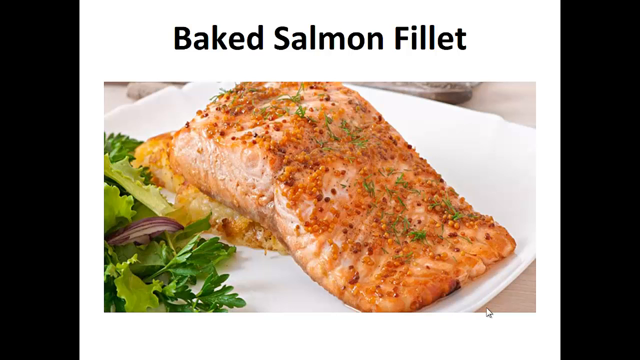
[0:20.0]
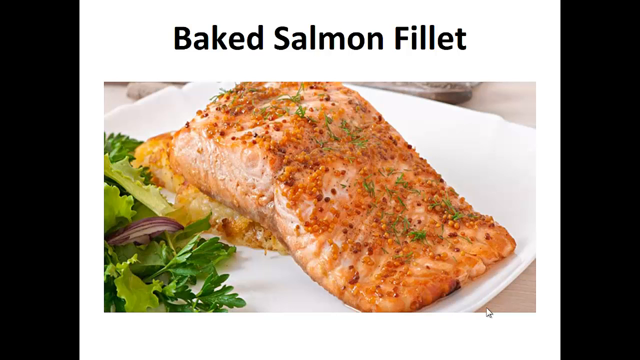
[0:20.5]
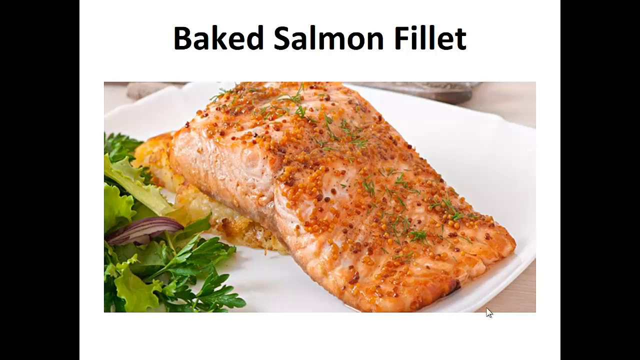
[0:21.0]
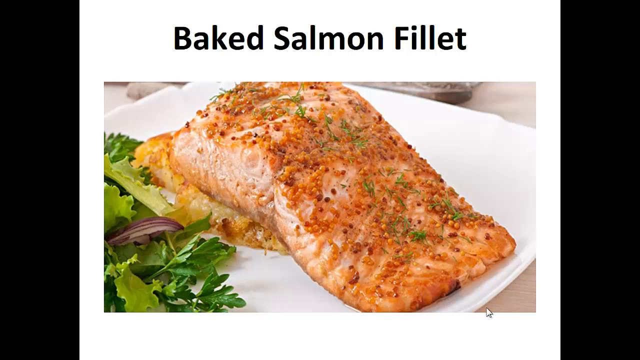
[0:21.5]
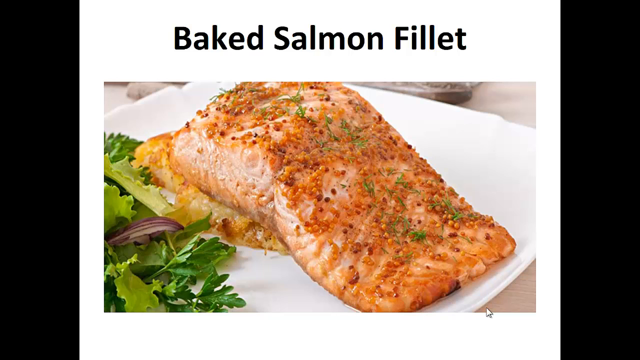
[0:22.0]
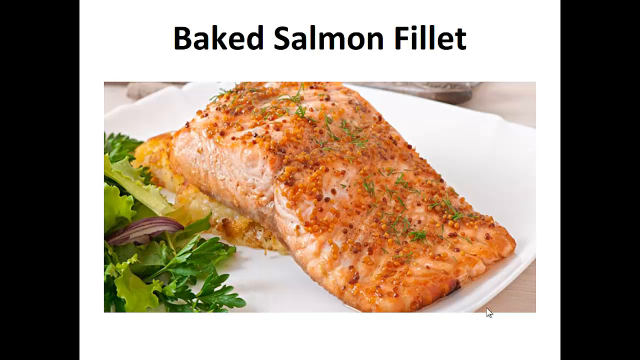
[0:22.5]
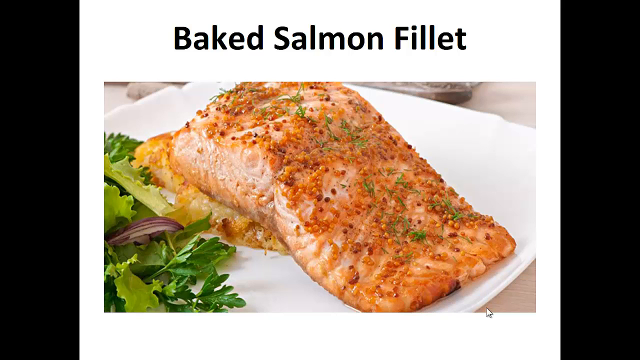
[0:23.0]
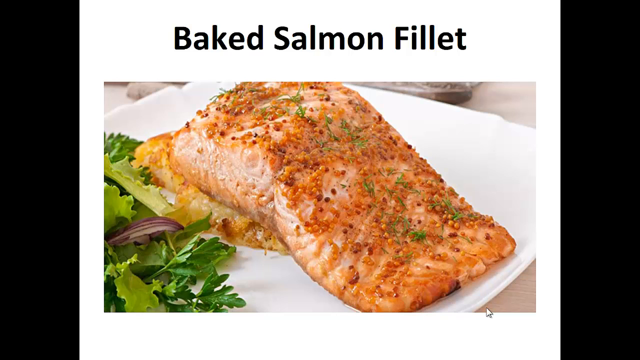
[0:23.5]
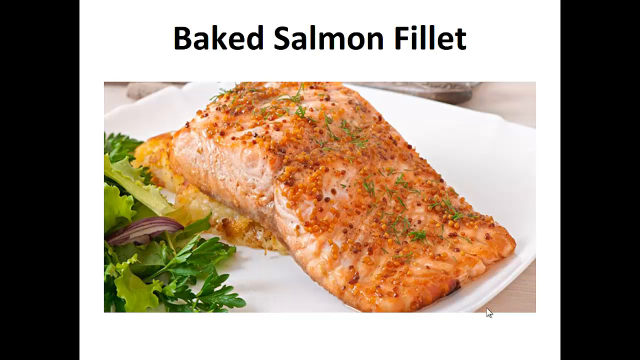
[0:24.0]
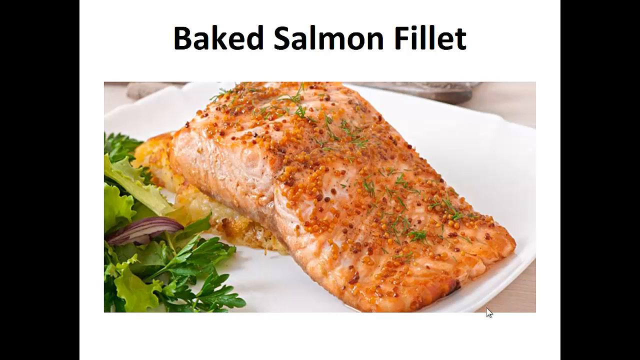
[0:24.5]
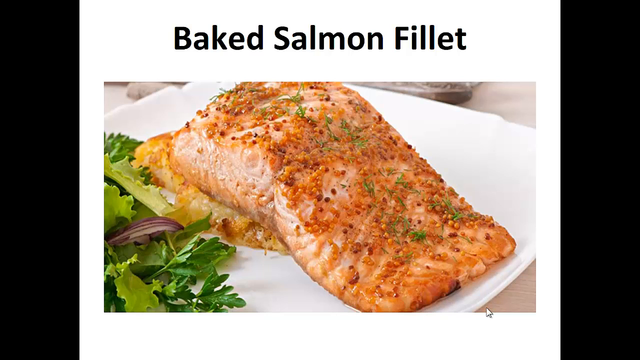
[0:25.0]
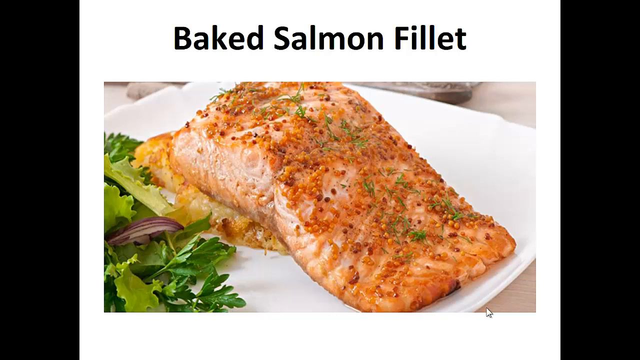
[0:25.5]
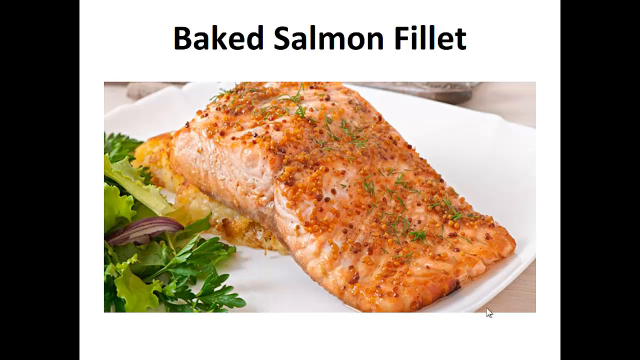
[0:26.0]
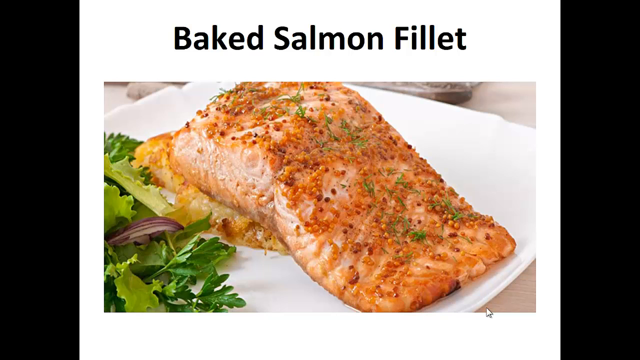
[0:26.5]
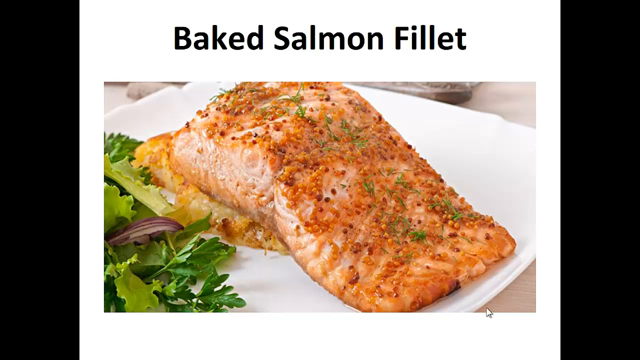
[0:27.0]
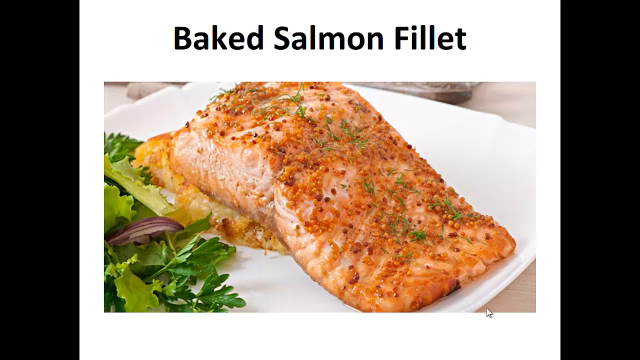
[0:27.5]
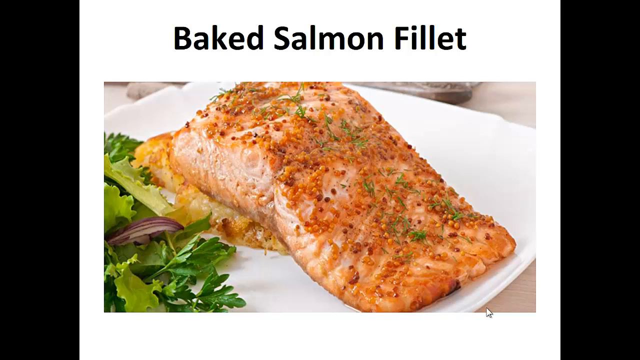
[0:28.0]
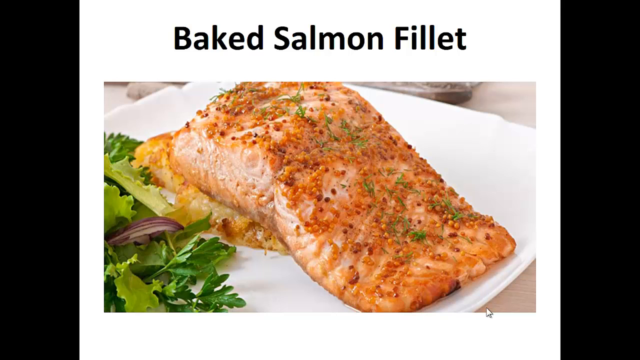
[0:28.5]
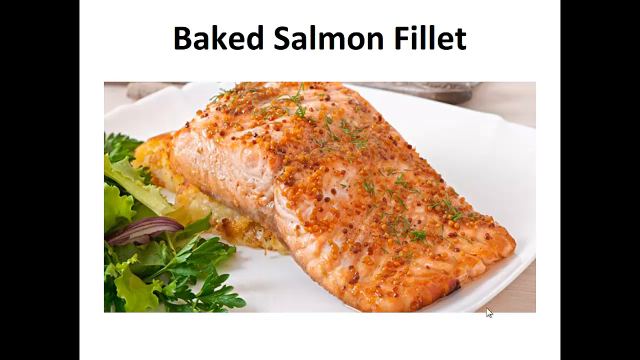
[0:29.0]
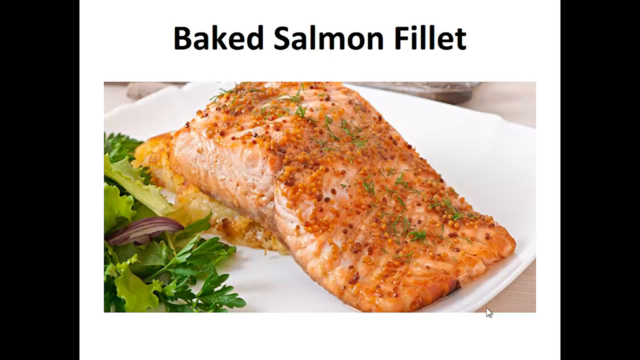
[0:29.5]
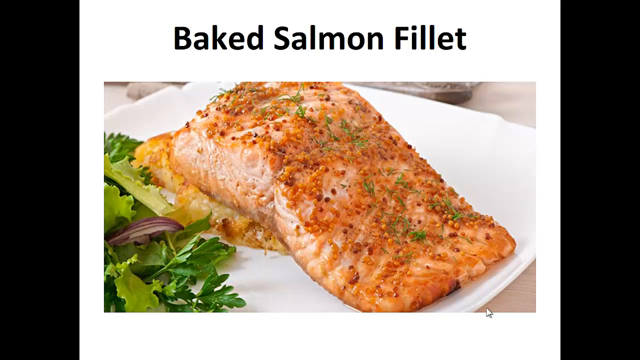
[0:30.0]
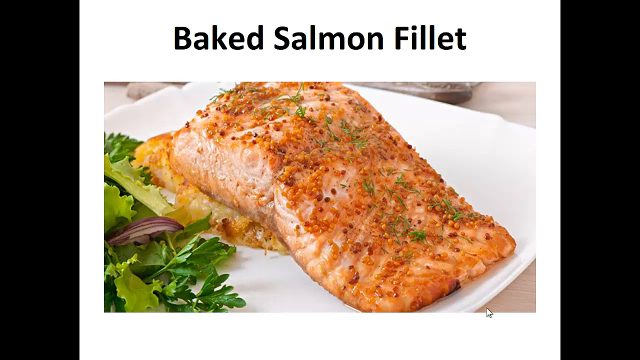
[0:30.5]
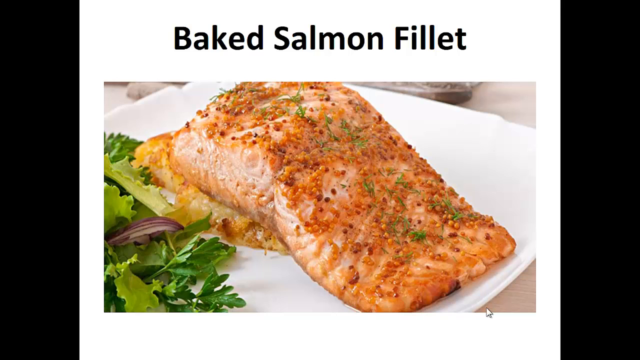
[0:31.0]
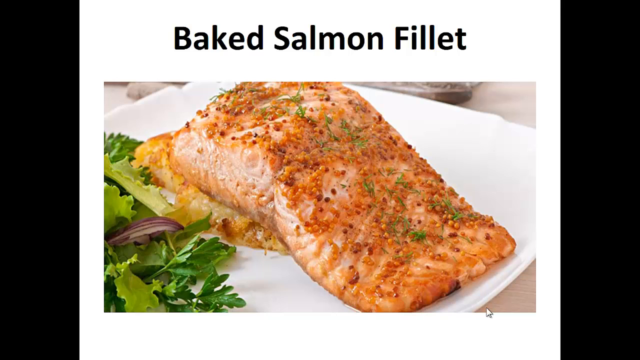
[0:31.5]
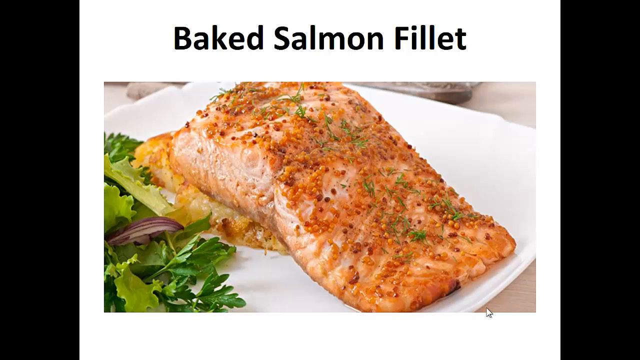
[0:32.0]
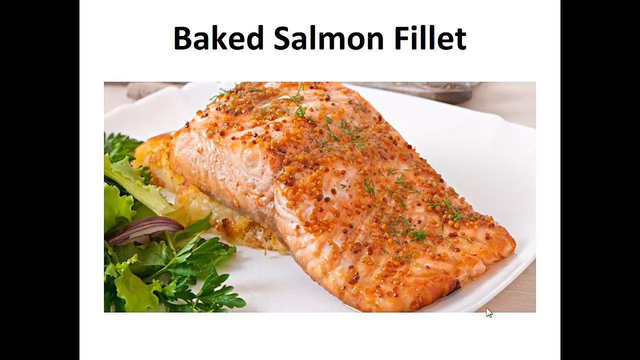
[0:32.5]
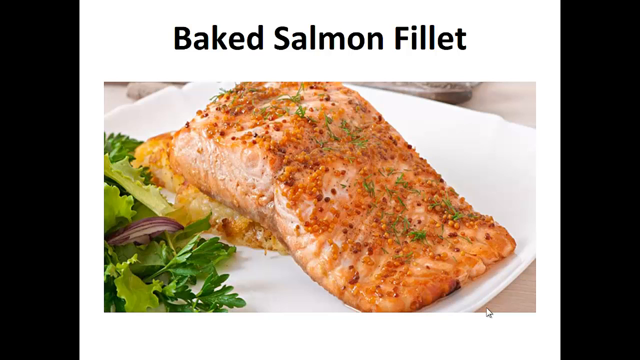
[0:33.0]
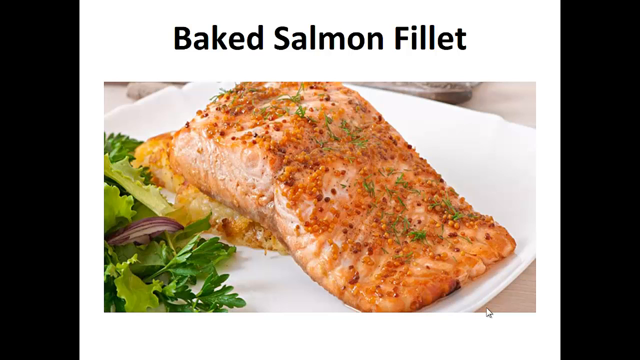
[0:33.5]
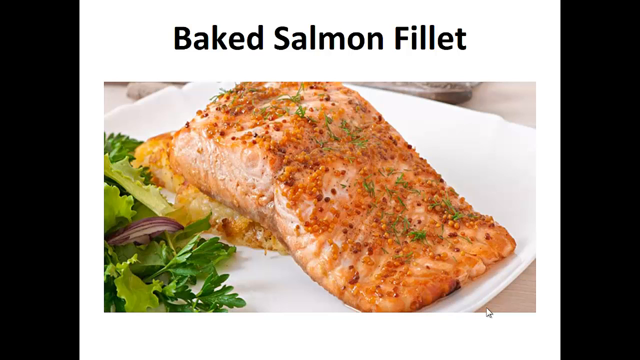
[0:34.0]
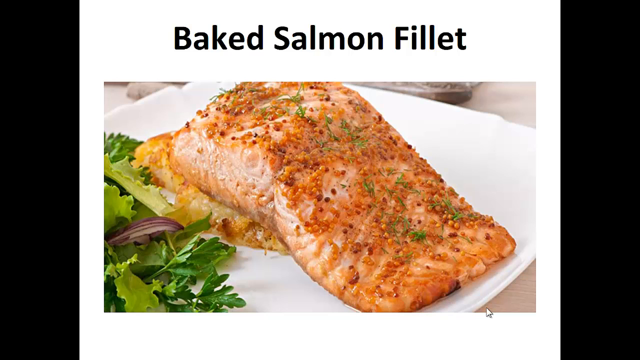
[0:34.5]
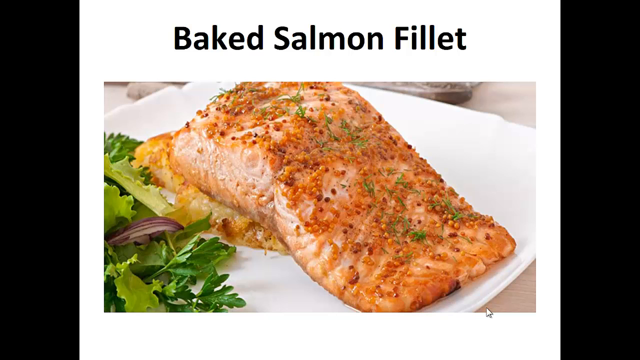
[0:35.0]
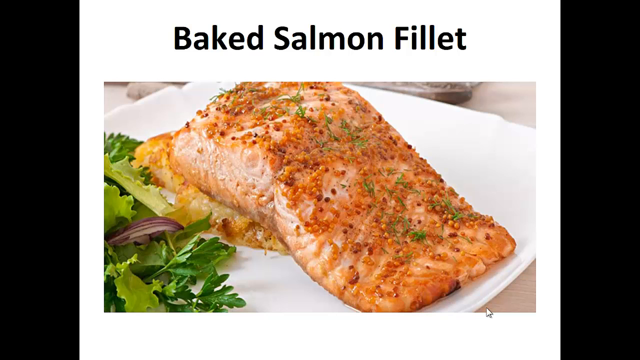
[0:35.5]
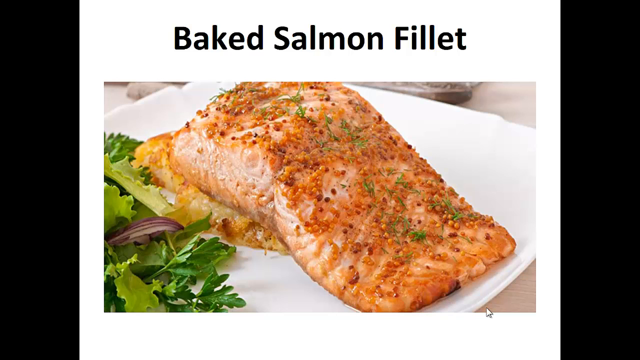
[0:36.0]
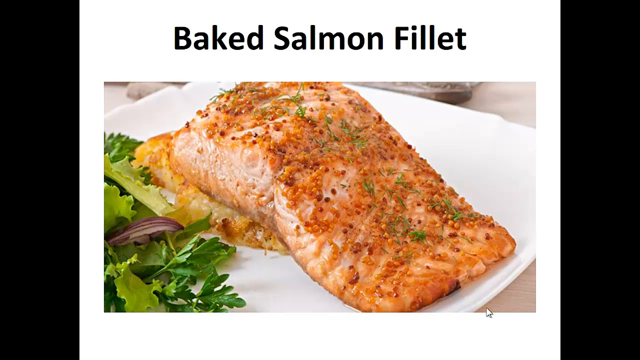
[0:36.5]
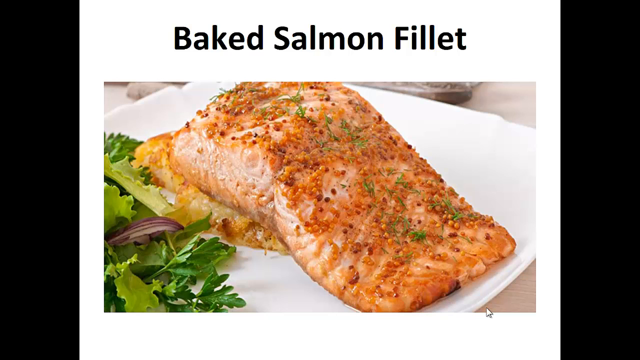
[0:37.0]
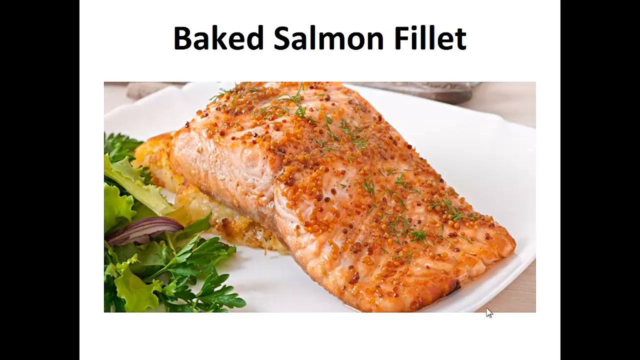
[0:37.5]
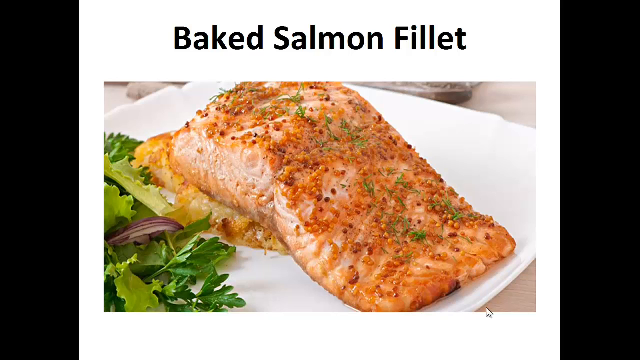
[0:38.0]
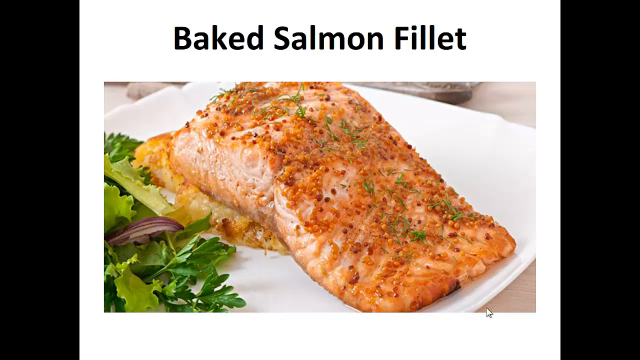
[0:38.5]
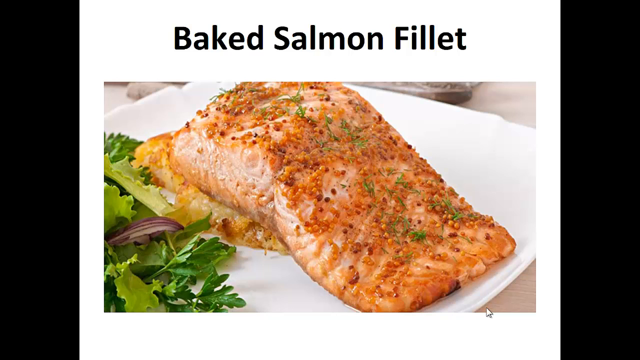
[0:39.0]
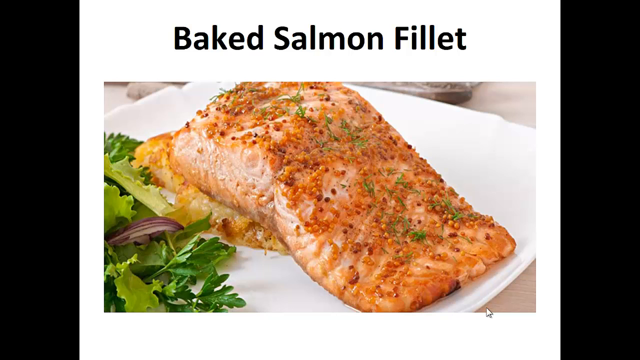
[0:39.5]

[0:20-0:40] The salmon fillet looks neatly baked and carefully arranged on the plate. There is what looks like green parsley or some other herb on it. The plate appears to be on a grey counter.